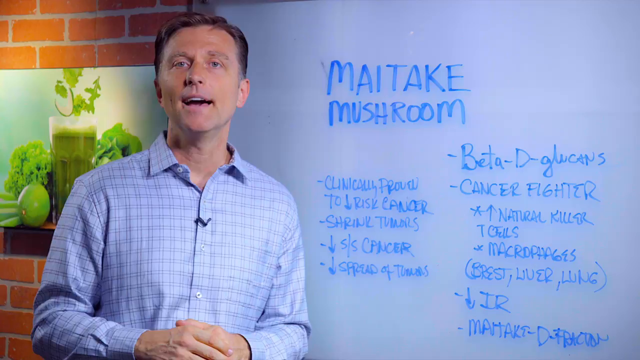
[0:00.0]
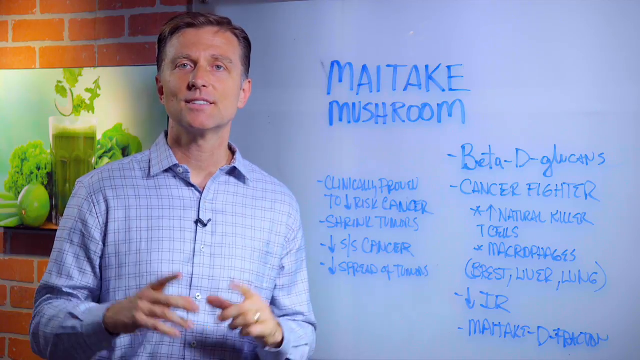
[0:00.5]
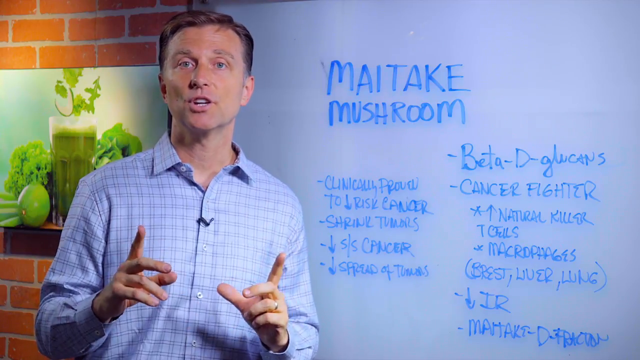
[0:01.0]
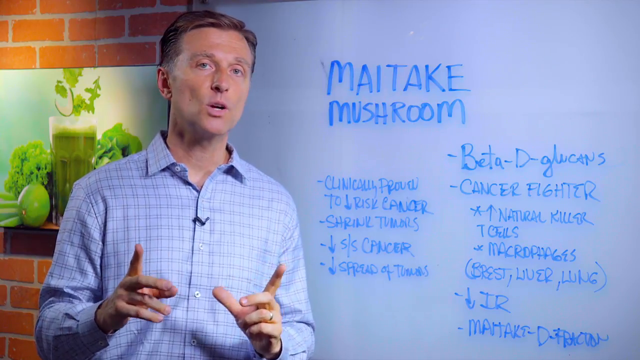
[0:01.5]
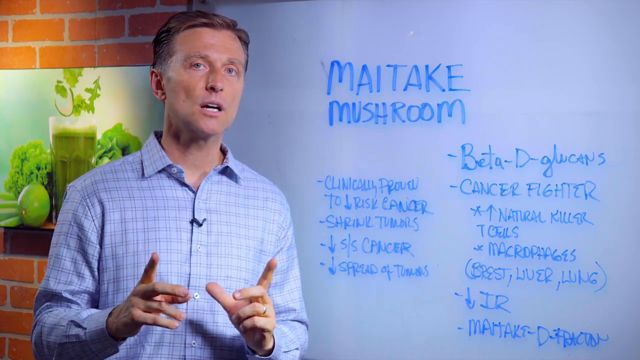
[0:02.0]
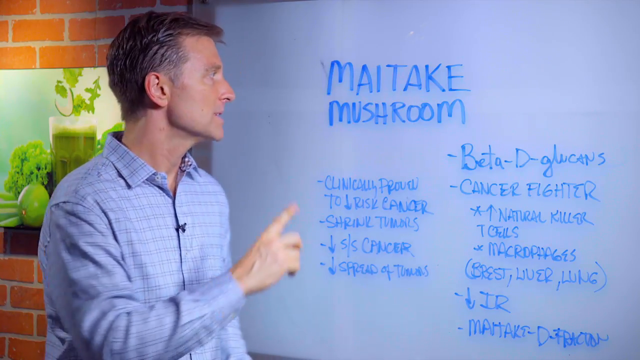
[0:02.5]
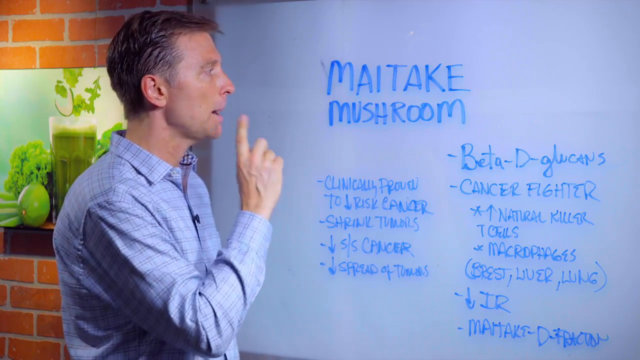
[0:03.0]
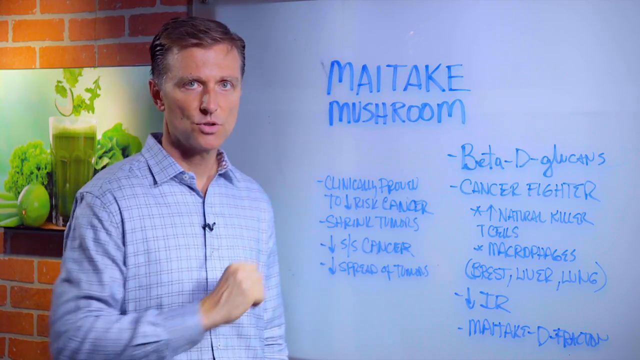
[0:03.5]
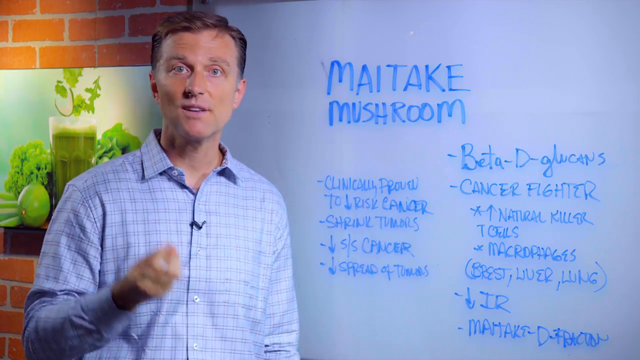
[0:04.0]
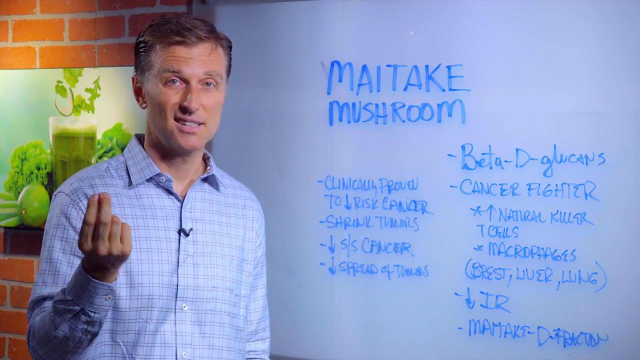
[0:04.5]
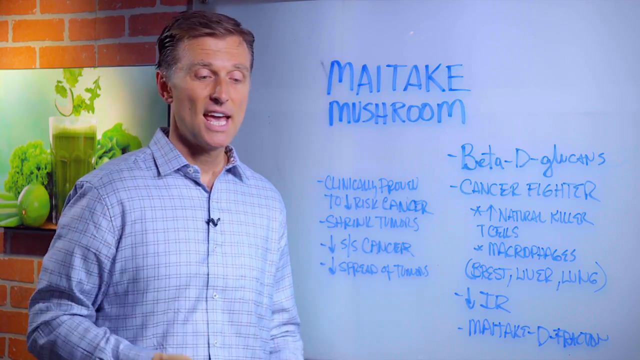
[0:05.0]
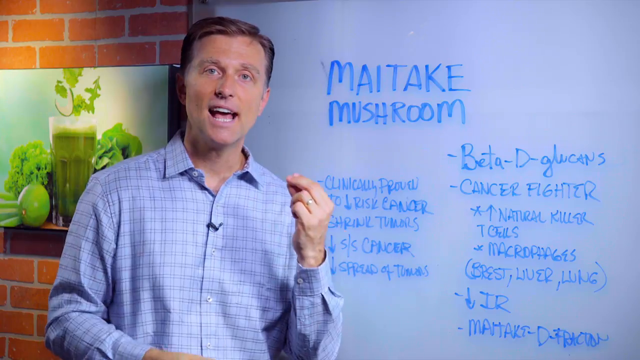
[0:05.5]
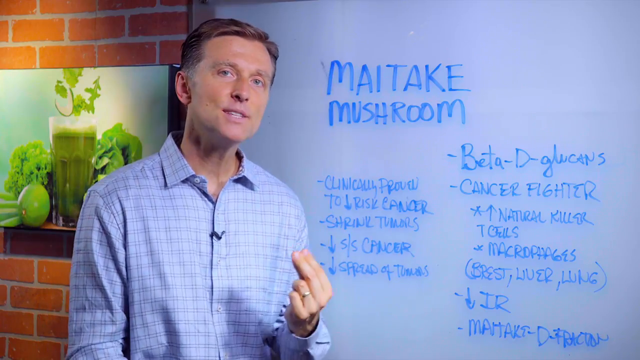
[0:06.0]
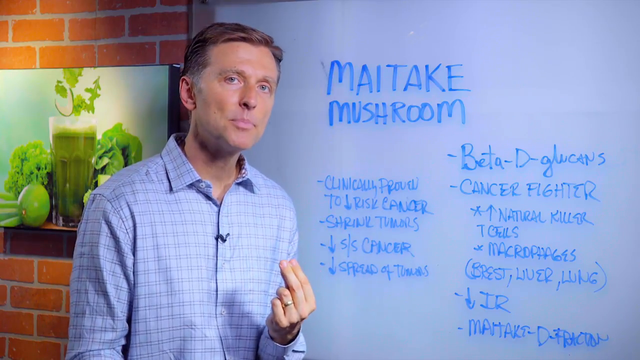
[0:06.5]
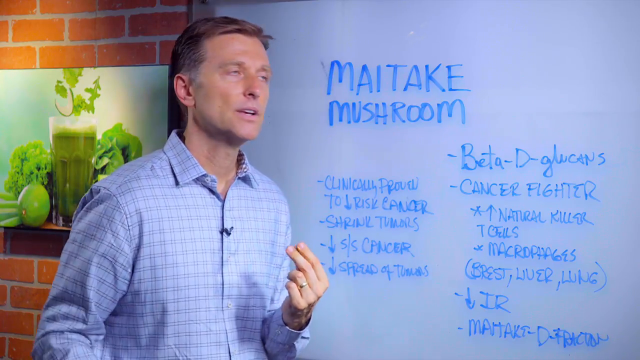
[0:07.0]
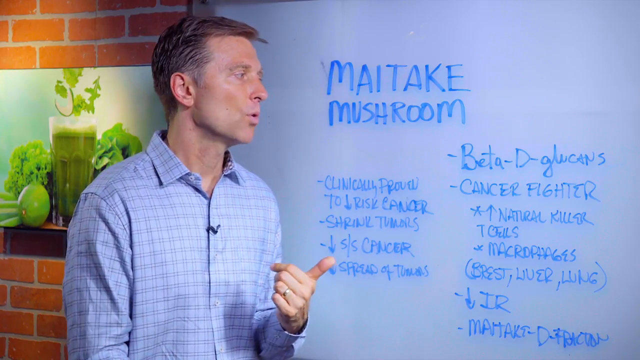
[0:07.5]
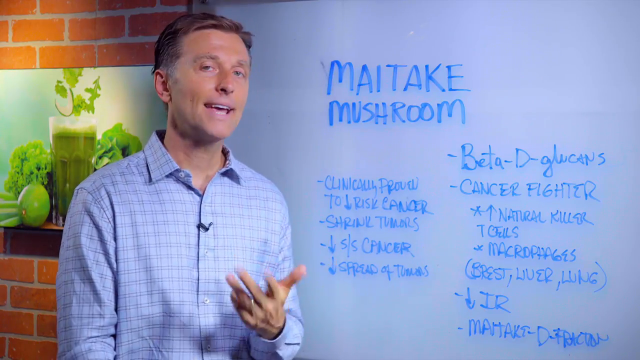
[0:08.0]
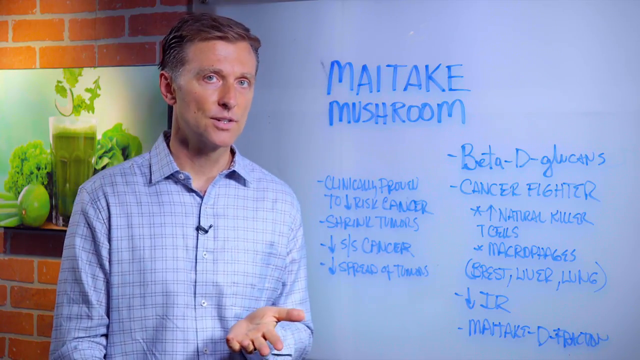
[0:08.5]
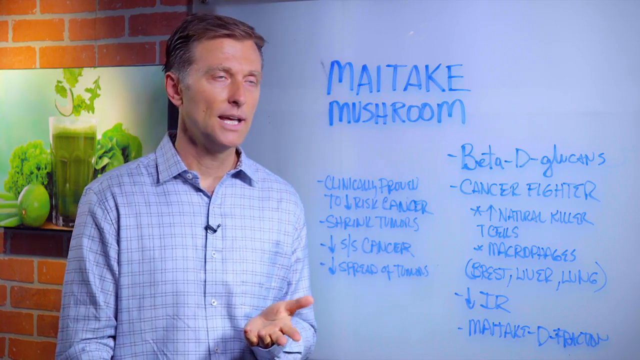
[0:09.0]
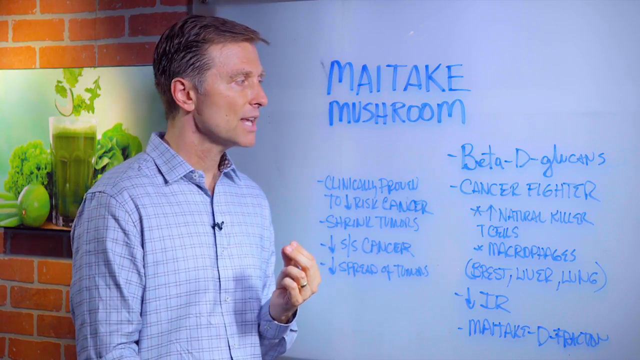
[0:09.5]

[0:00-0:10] A man is about to speak to the camera. On the right-hand side is a whiteboard that says "MaiTake Mushroom" with what looks like a list of different ingredients and benefits, all written in blue marker. On the left-hand side are a lime, some green plants, and a green smoothie. The man appears to be middle-aged. He holds his hands in front of his stomach area with both index fingers pointing upward, then turns to the side, points to the whiteboard, and looks back at the camera. With his right hand he makes a gesture with his index and middle fingers pressed together and pointed at himself, points at the whiteboard with his thumb, and makes another hand gesture while speaking.